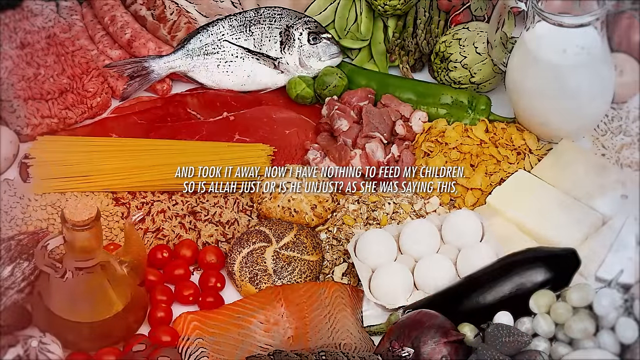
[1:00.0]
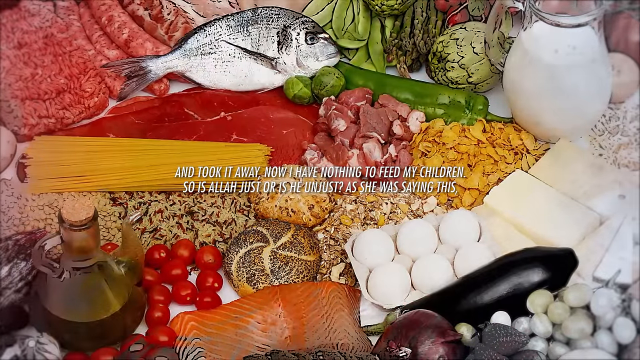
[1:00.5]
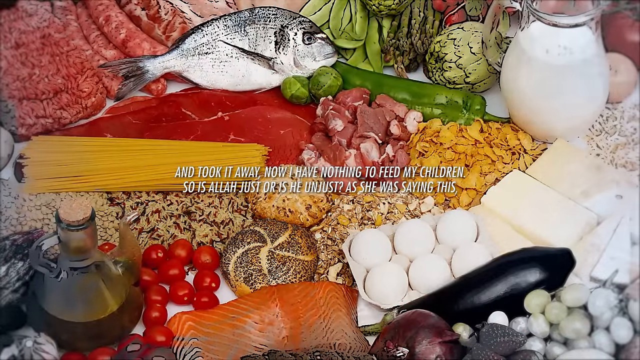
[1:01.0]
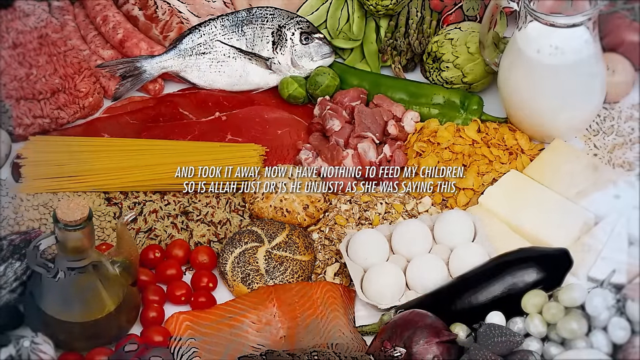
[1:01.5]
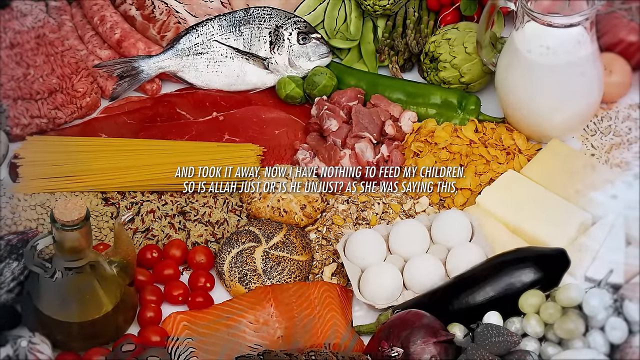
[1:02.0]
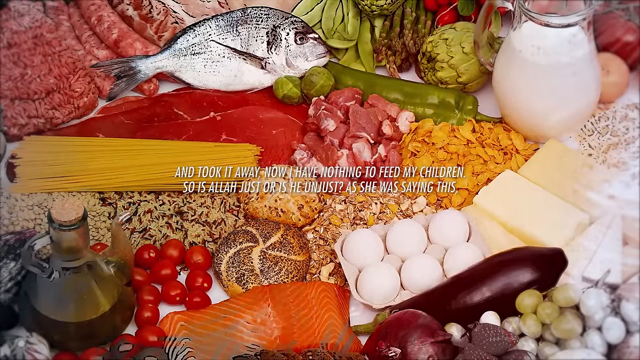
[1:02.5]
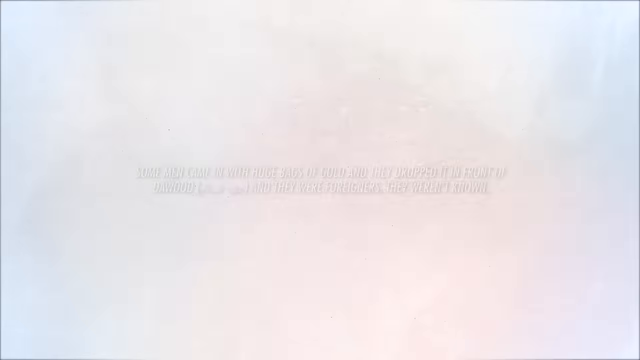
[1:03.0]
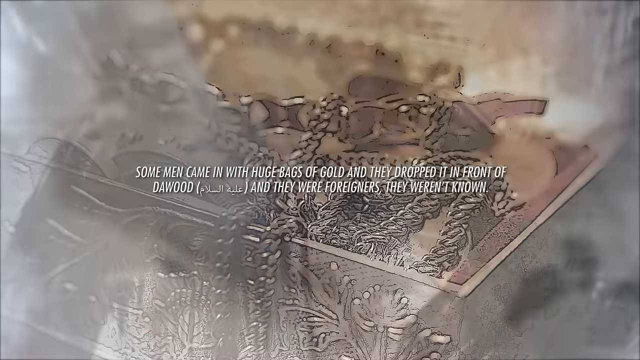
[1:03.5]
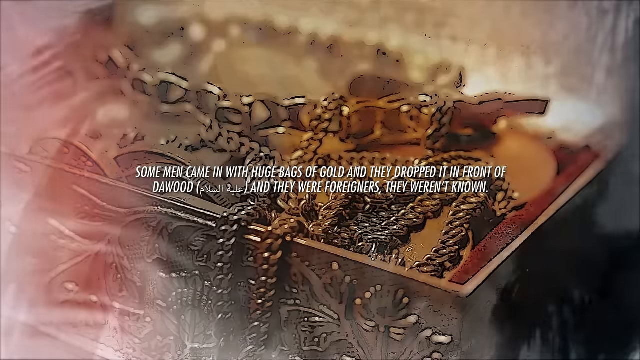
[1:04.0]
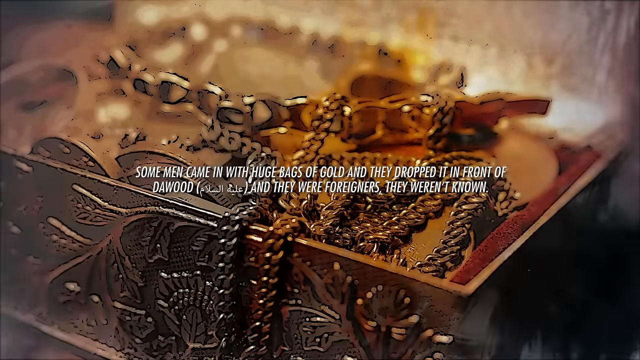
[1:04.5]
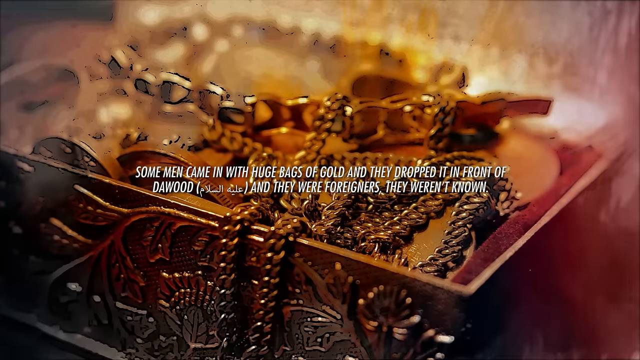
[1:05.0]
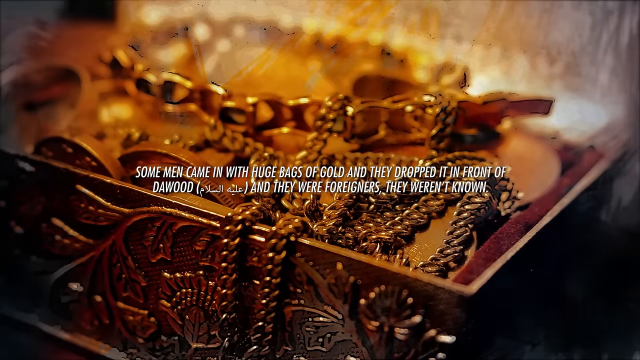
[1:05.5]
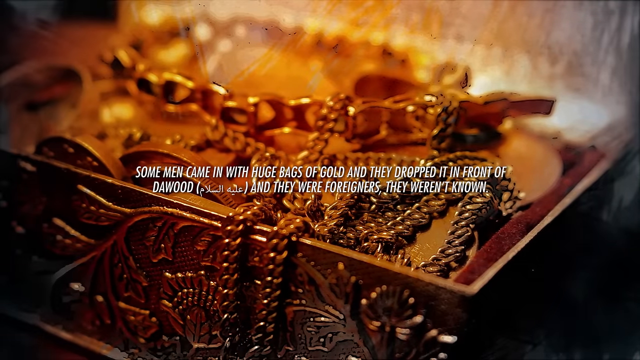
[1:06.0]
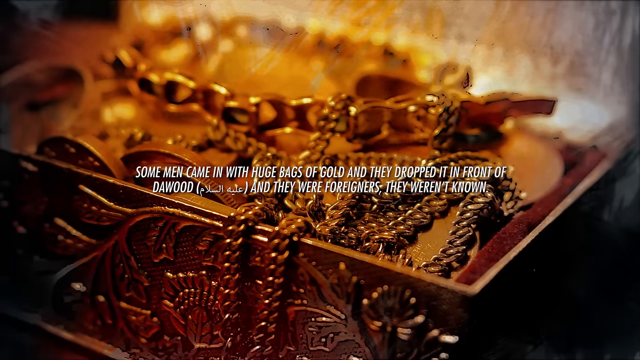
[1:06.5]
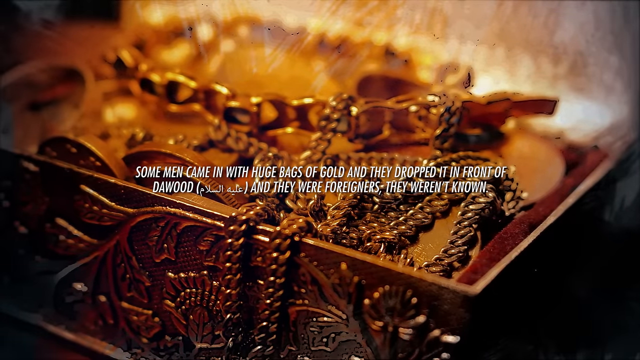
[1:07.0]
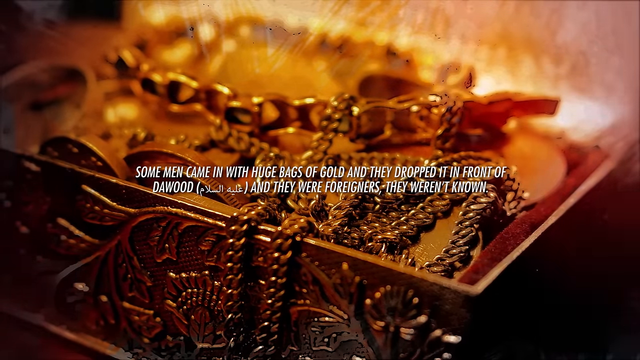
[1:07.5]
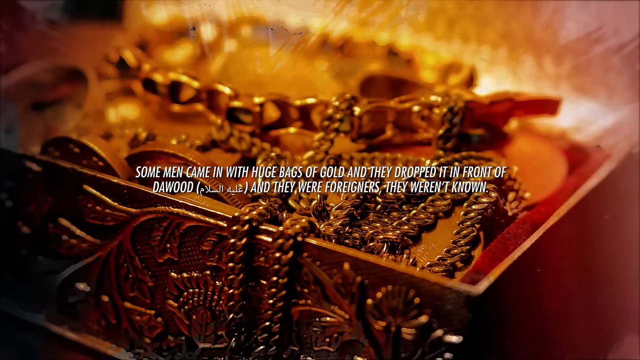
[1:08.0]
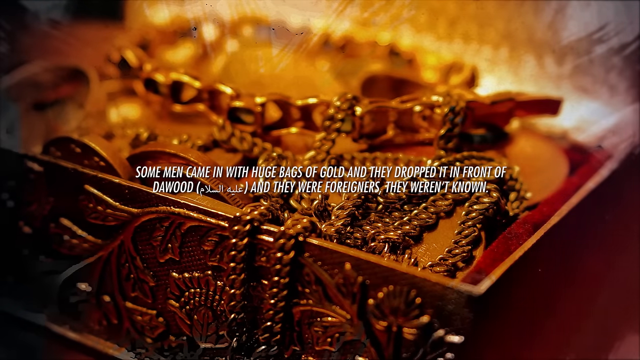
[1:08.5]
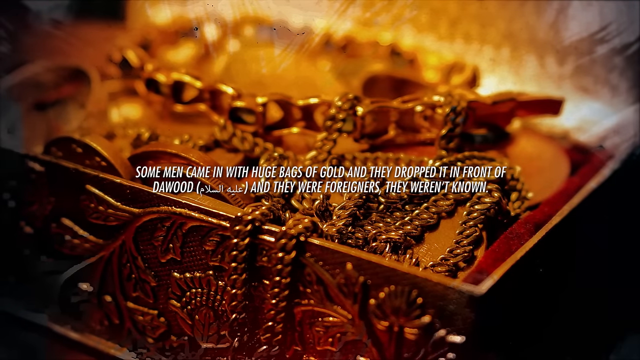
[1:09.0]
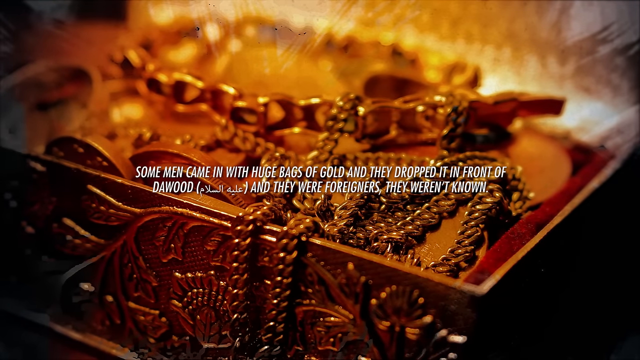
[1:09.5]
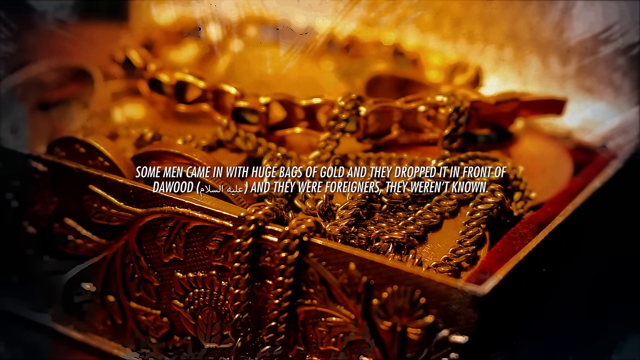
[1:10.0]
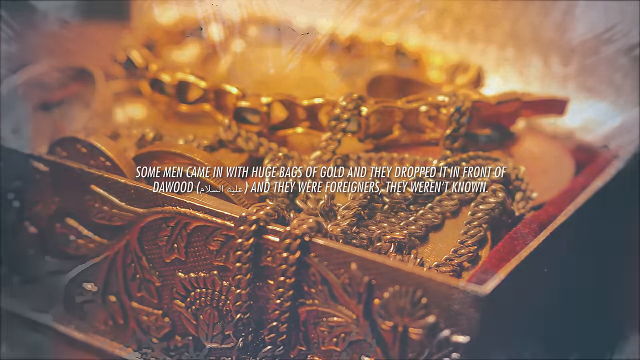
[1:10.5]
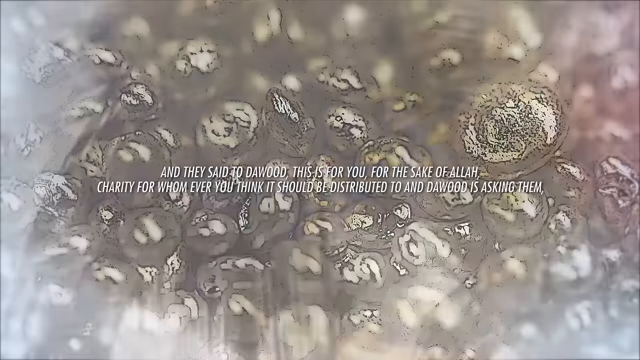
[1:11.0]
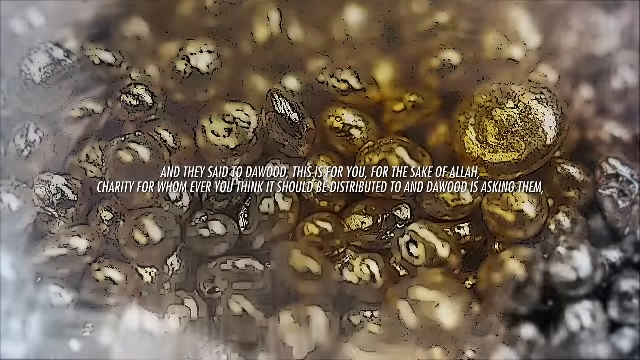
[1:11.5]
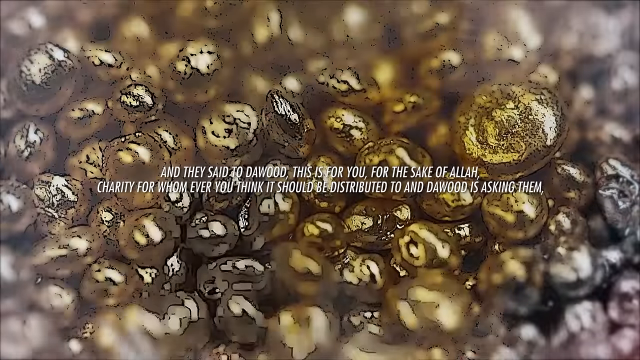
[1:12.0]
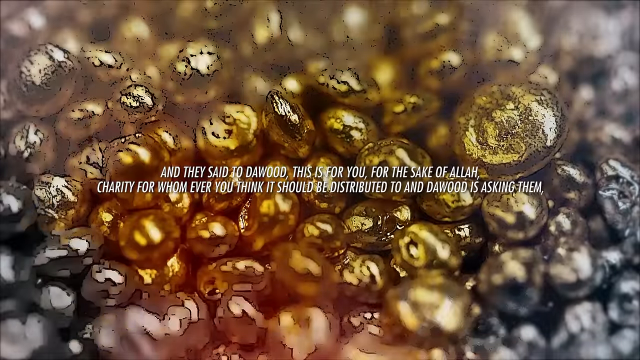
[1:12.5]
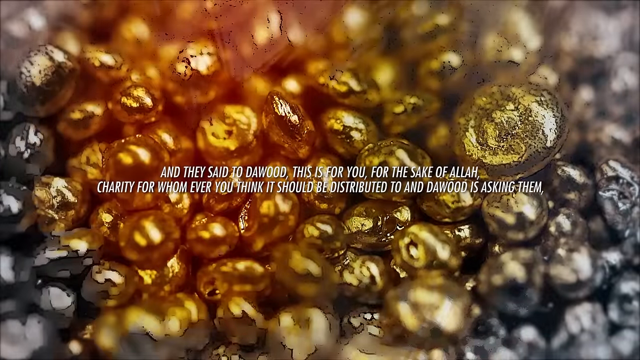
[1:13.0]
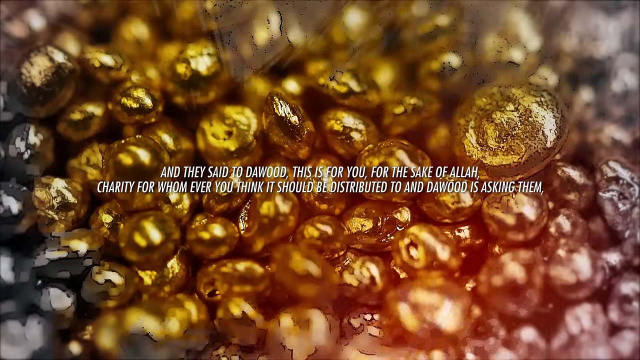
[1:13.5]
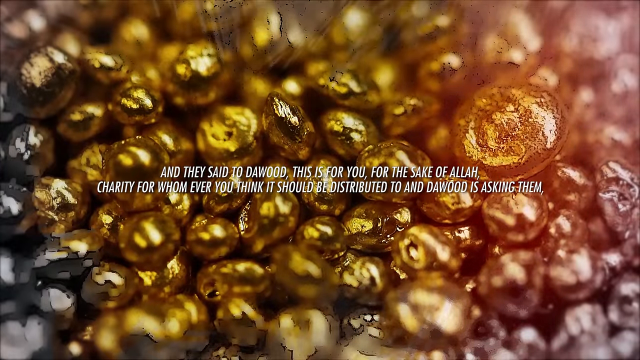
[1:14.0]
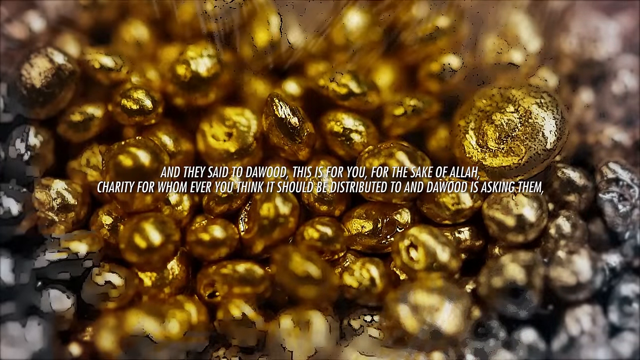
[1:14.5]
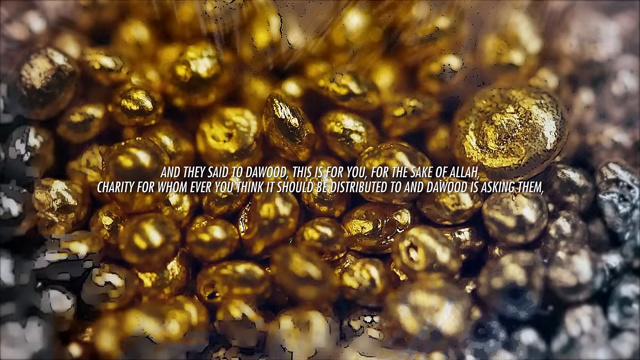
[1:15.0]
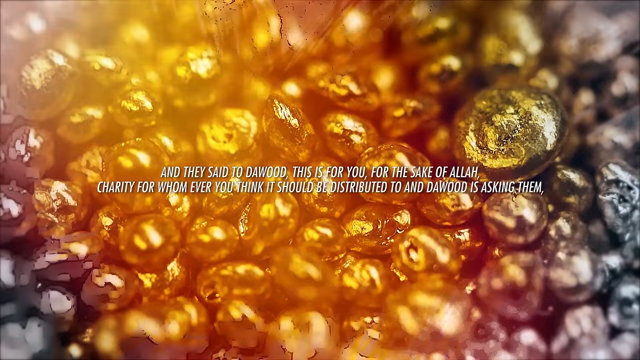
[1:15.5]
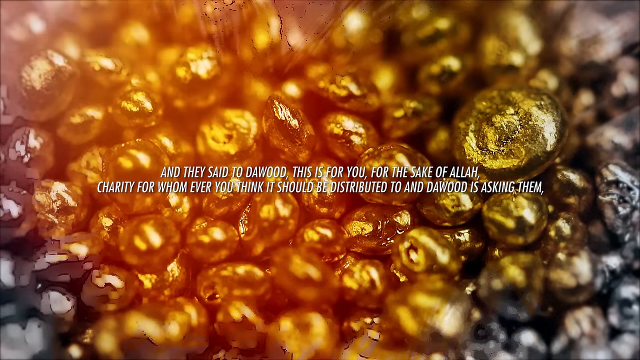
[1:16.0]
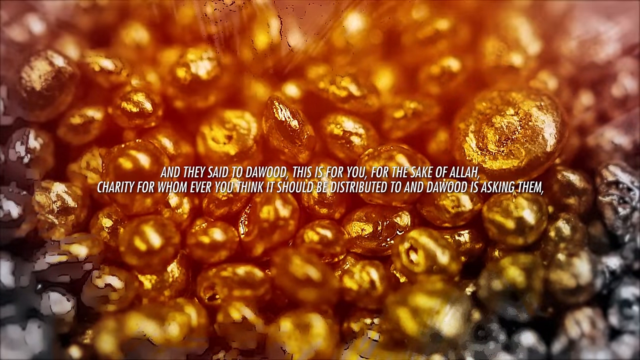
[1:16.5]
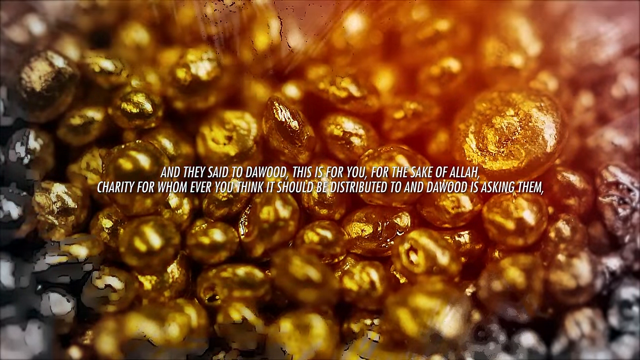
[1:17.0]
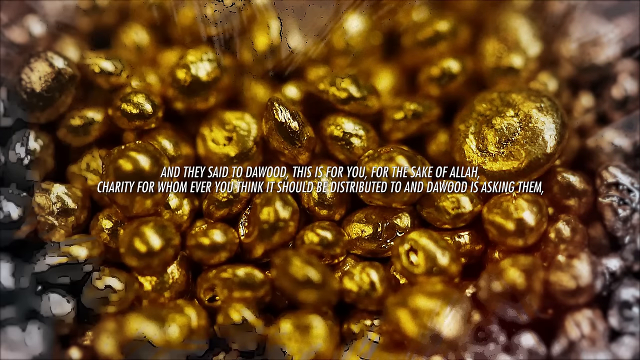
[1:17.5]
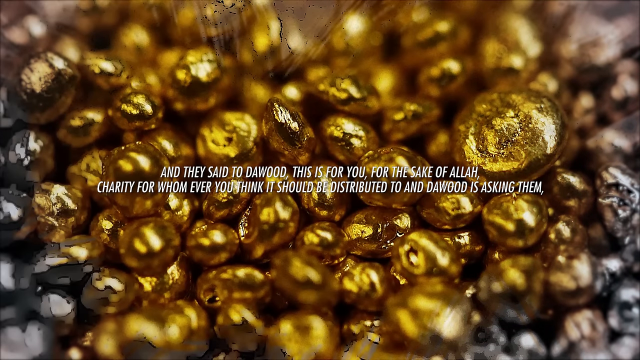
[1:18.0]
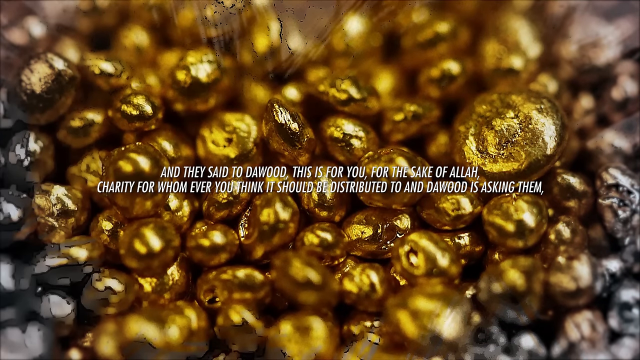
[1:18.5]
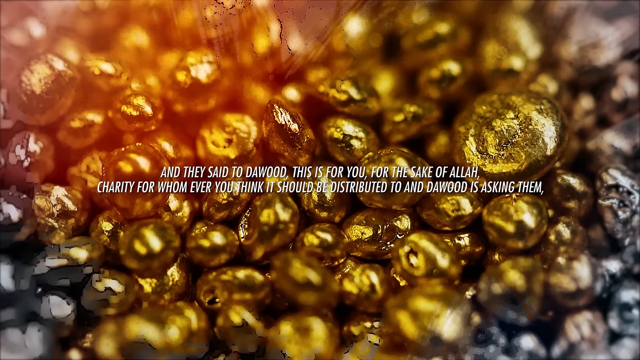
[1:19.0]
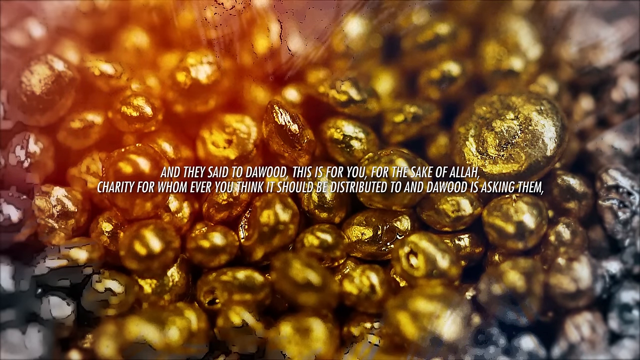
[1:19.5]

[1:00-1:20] A pile of food fills the view with text in the center, placed over some grains. There are pasta sticks on the left with small strings of pasta pieces below them, and bread and crumbs of chips on the right of the text. Below the cookie or chip in the center is a round pastry dish. To the left of that is a bunch of tomatoes, and to the left of those is a gourd. Below the tomatoes and pastry dish is a piece of salmon. To the right are six white eggs, and below those are eggplants and garlic. Below that, above the text, are cut pieces of meat that look like red meat, perhaps beef. Above that is what looks like a big green bean or some sort of pea pod. There are artichokes, a white fish with gray scales facing right, more meat at the top left, and a jug of milk on the right with more artichoke plants beside it. The scene then switches to something like a chain on top of a gold box, and the text seems to mention gold as well. A close-up of a bunch of gold nuggets follows, and then more text appears with the gold nuggets.